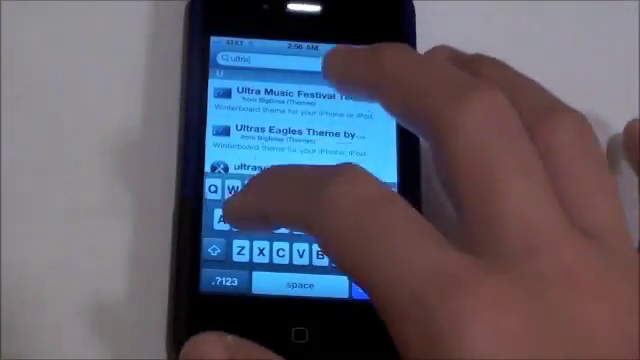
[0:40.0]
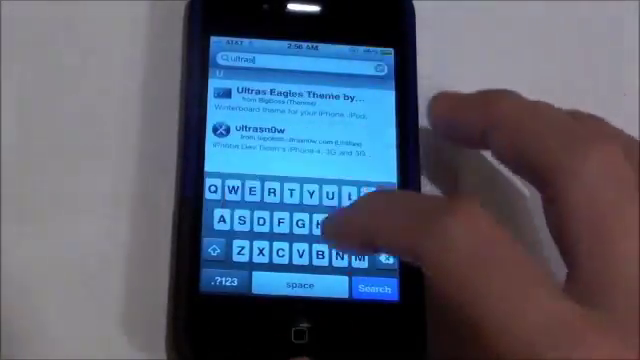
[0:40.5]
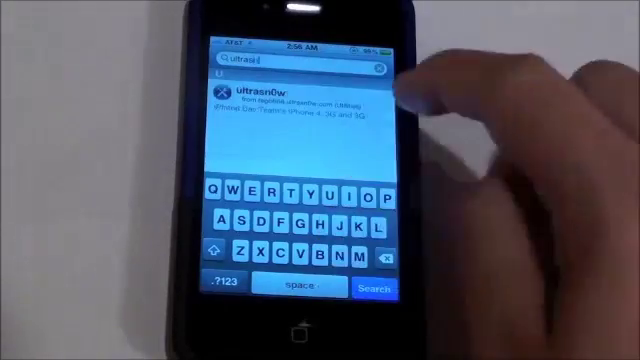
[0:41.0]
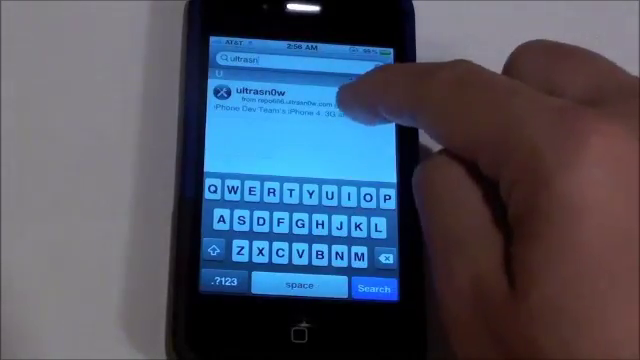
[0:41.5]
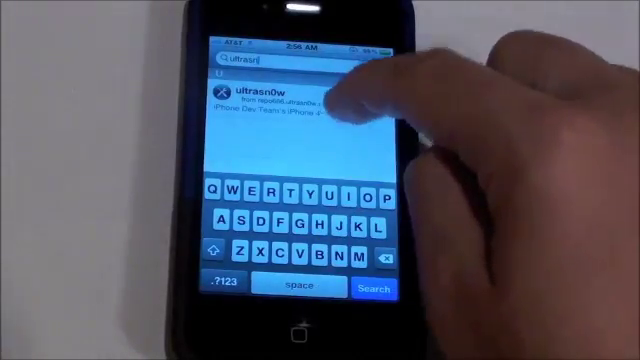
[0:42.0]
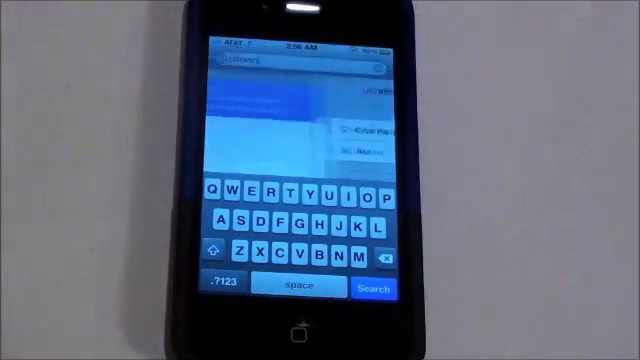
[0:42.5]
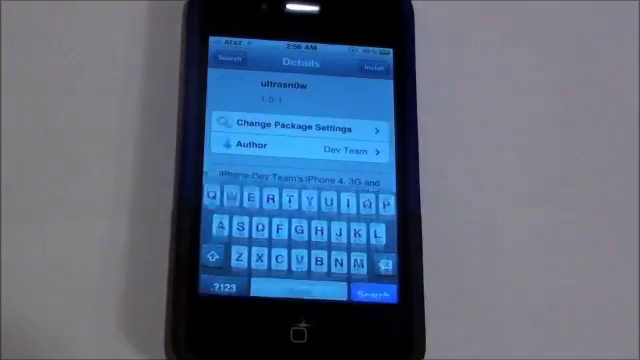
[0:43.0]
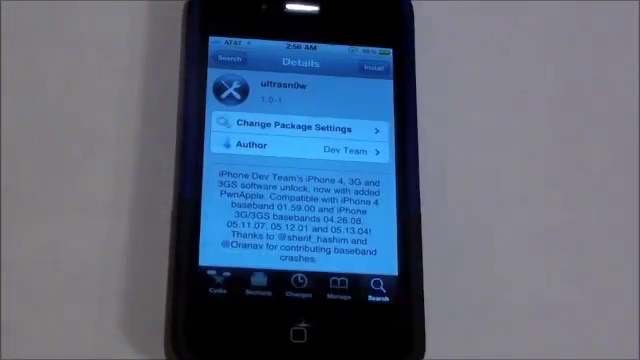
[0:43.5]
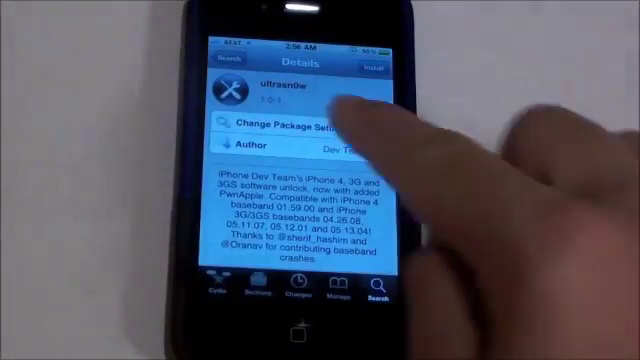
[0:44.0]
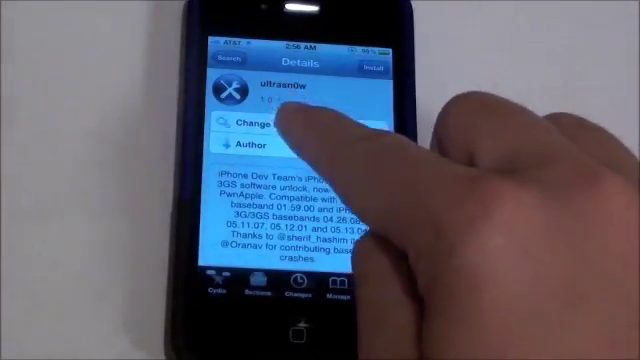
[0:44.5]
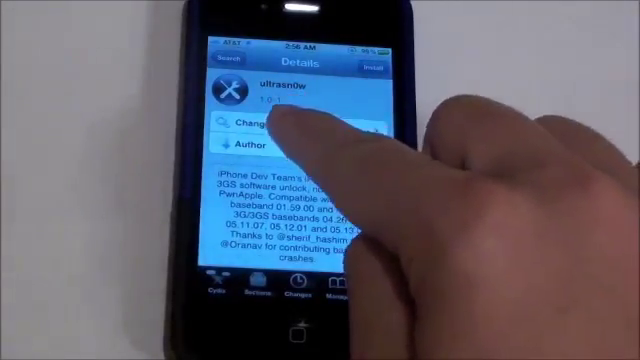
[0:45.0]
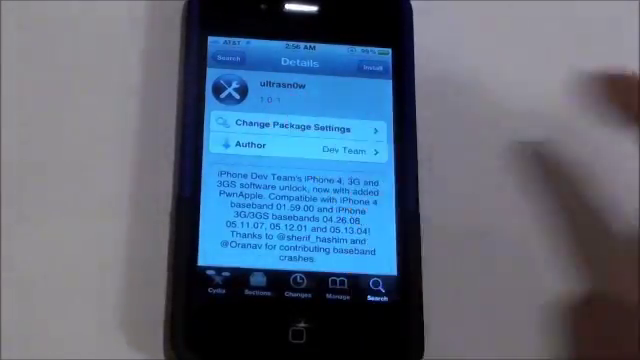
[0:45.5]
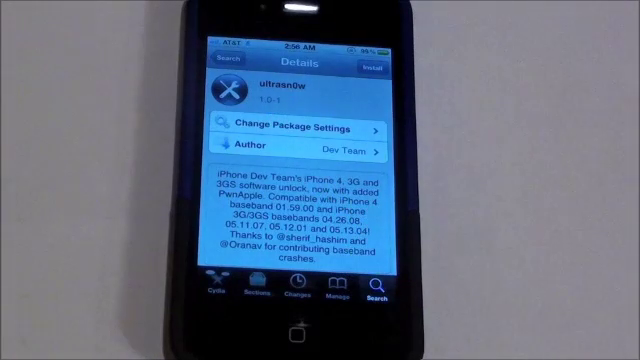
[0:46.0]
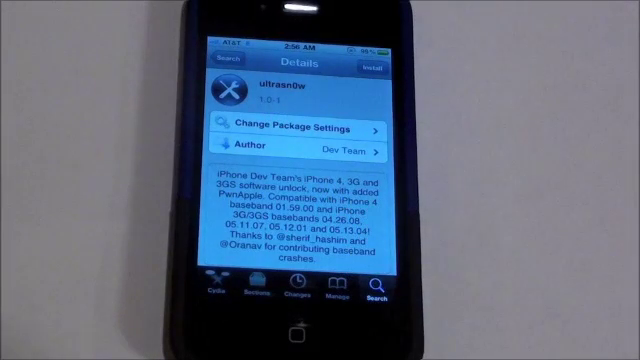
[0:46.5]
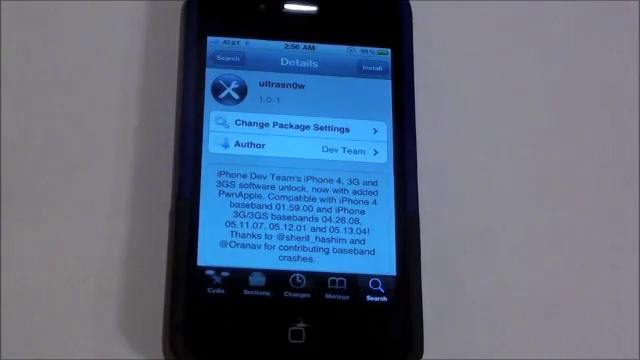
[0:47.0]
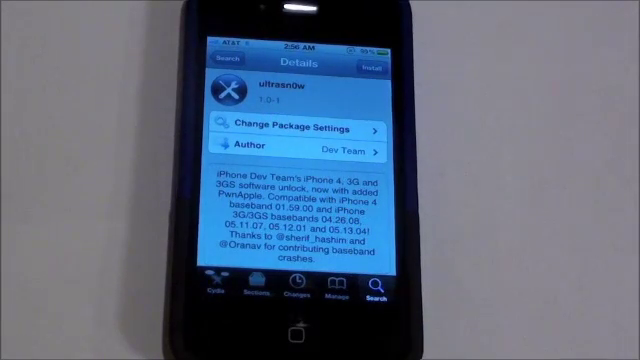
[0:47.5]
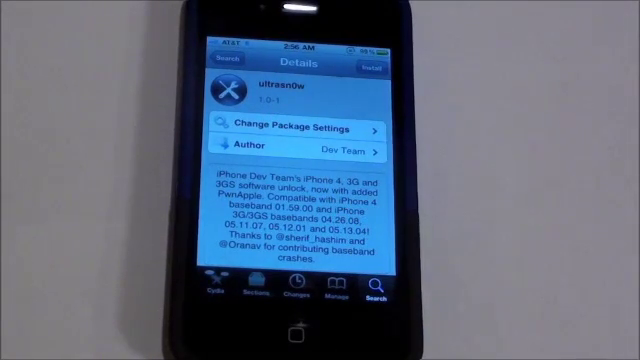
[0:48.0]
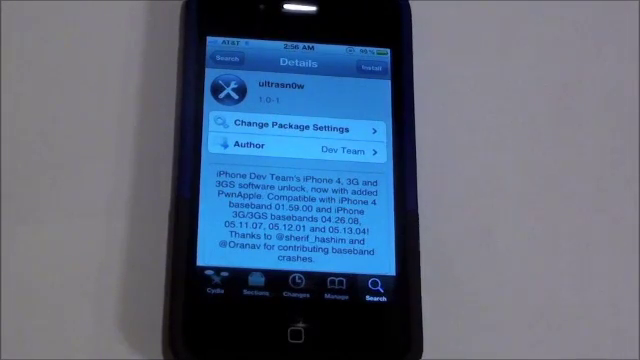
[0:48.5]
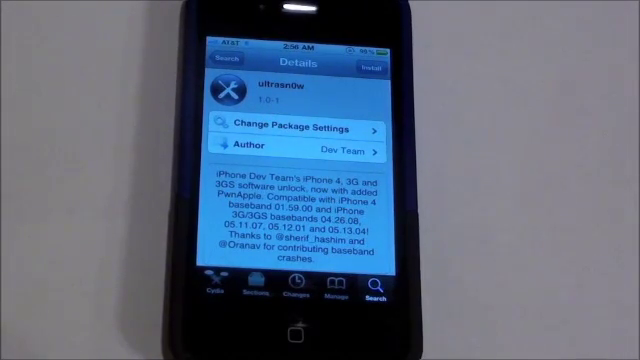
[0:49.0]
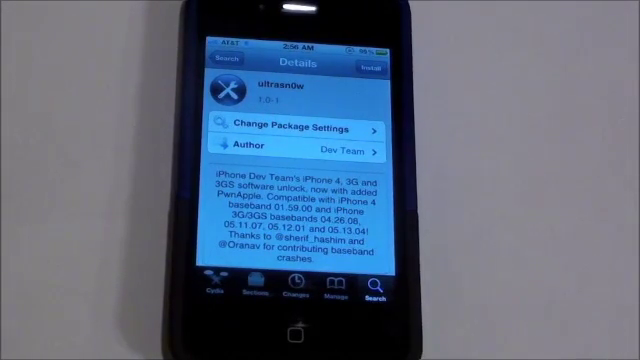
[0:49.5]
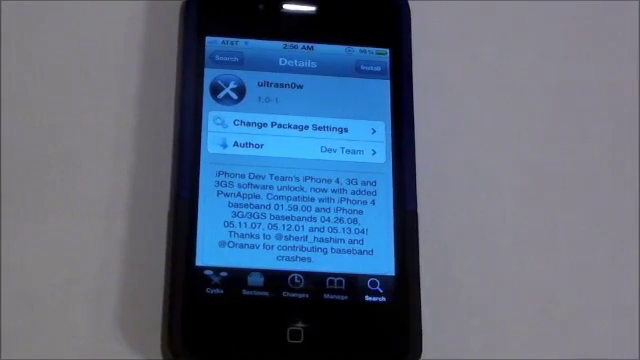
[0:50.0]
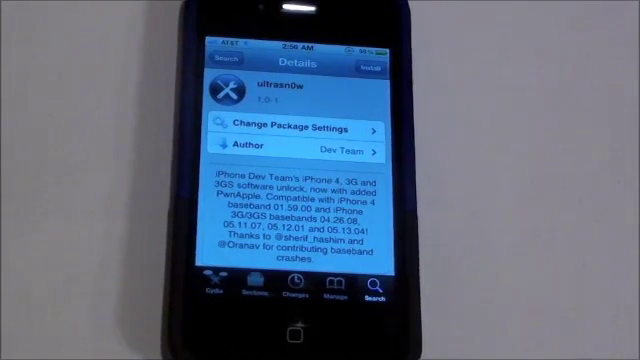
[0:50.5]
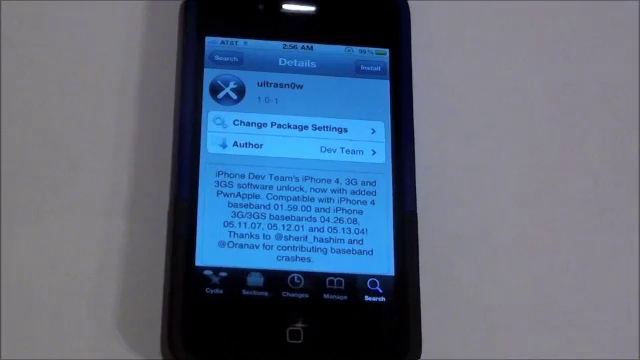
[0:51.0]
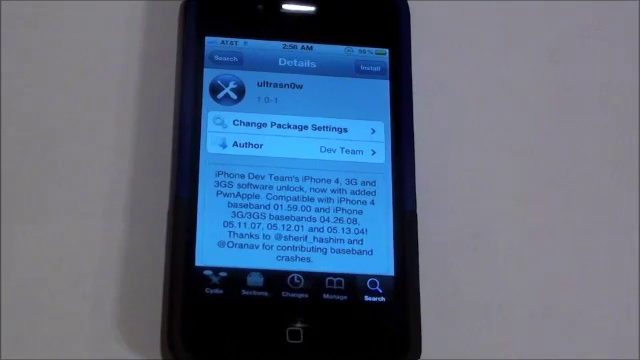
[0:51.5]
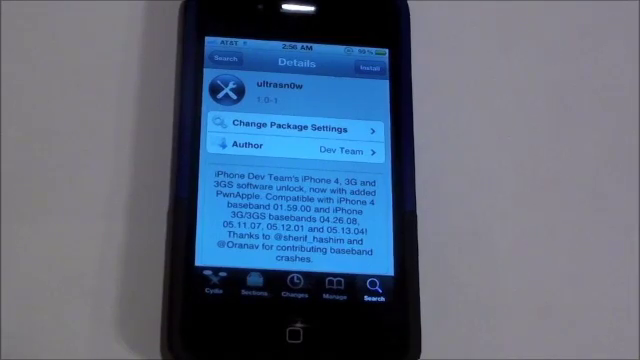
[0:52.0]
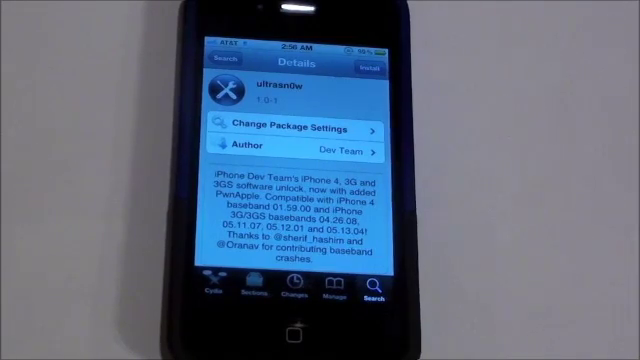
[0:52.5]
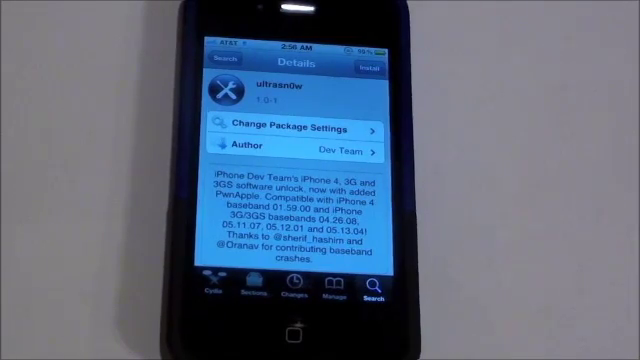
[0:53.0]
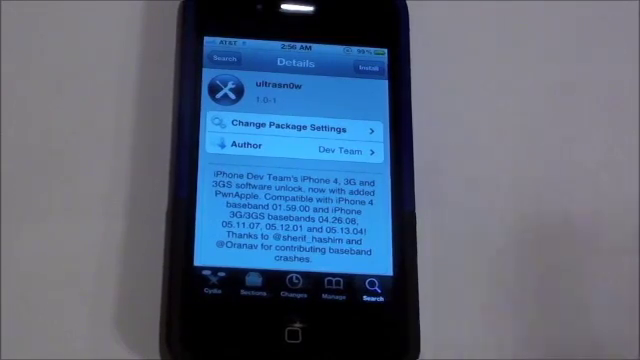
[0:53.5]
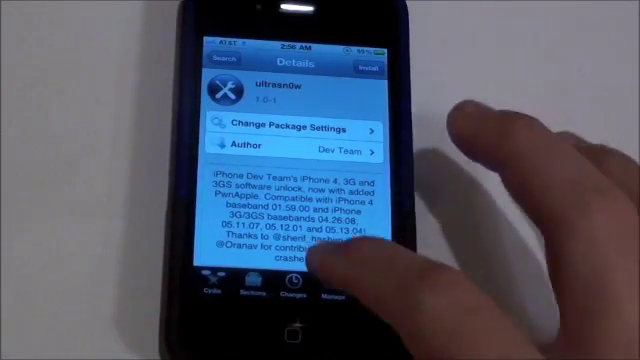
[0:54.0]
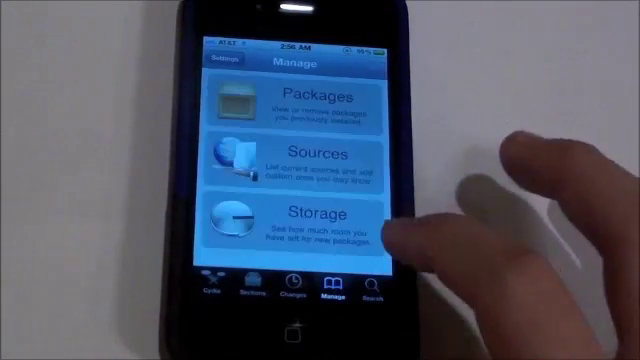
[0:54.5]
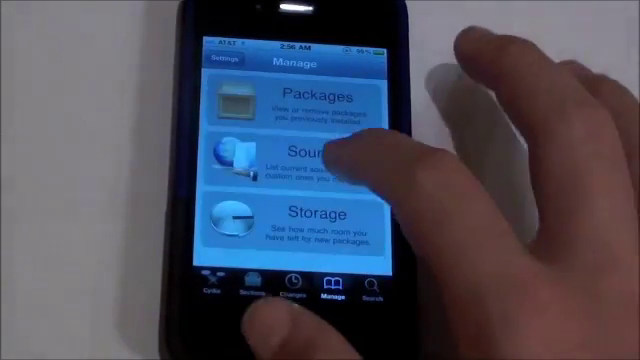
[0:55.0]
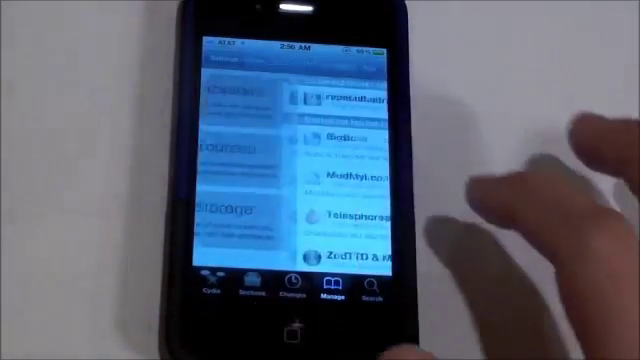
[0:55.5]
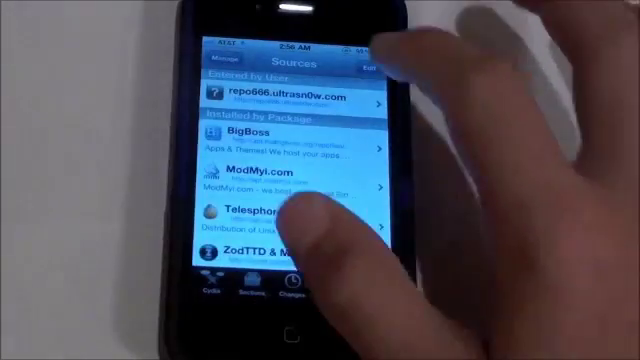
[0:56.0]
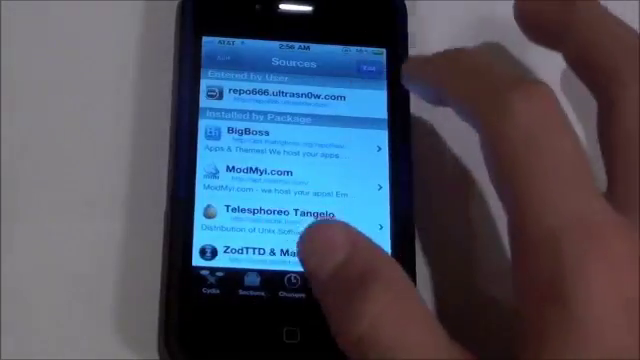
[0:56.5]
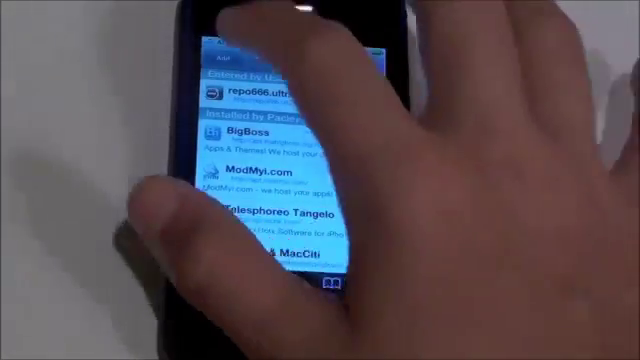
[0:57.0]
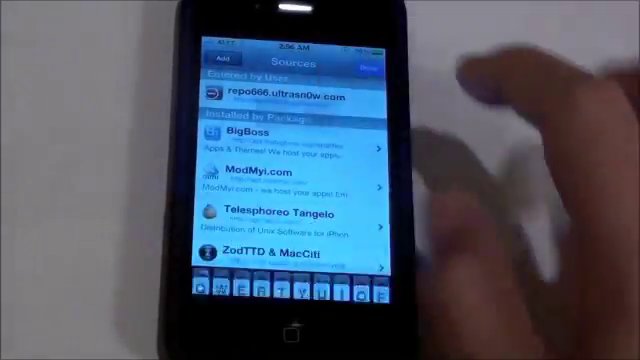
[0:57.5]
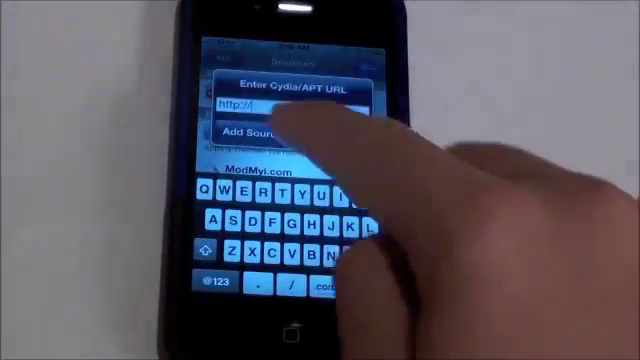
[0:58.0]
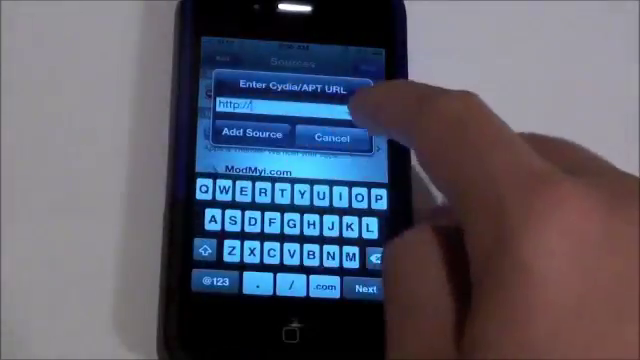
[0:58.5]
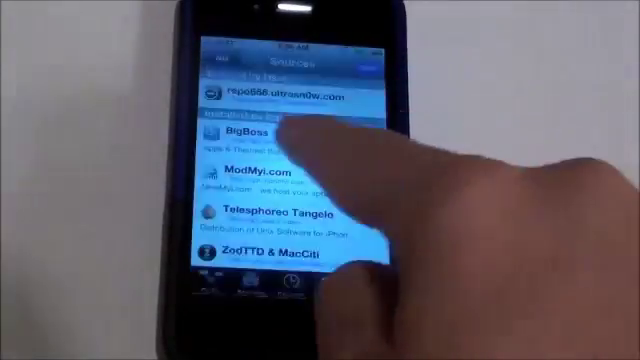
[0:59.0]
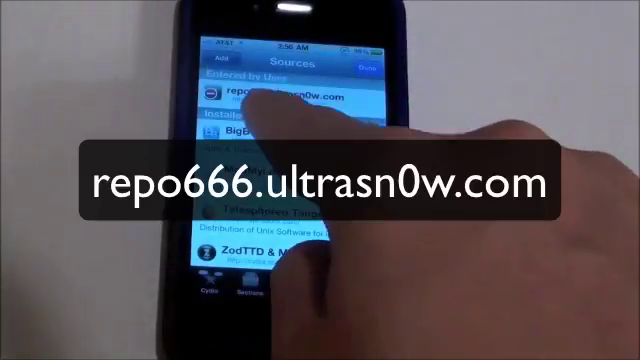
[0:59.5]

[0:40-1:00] The finger types into the search bar, apparently "Altraz now", though it is partially illegible. The app opens on a gray screen. At the top center it reads "details", with "Altraz now" and a tool icon. Below that it reads "change package settings", then "author", then "iPhone dev teams, iPhone 4, 3G, and 3GS software unlock. Now with added baseband", followed by a series of numbers and thanks to two illegible handles for contributing baseband crashes. The hand comes back and touches the phone, and the screen reads "Manage Packages", "Source" and "Storage". The finger clicks Source, showing a list of sources: "Repo666", "Big Boss", "BigMy.com", "Telesphoria" and "ZodTTD"; the hand blocks some of the text, making it illegible. He clicks Add, an add bar pops up, and he types into it. White text appears centered on the screen reading "repo666.ultrasn0w.com".